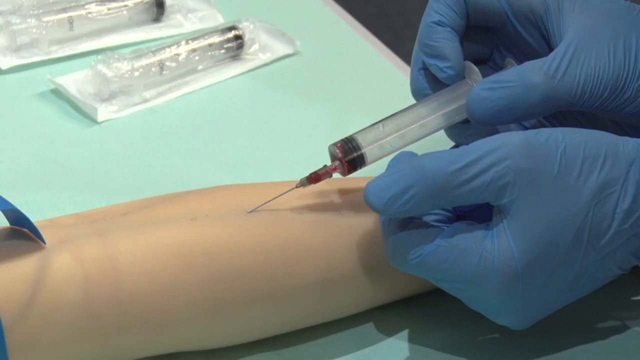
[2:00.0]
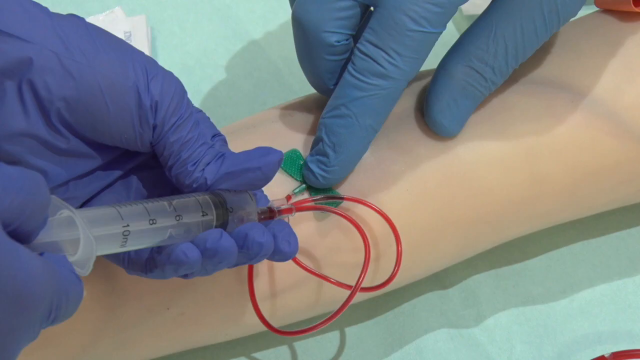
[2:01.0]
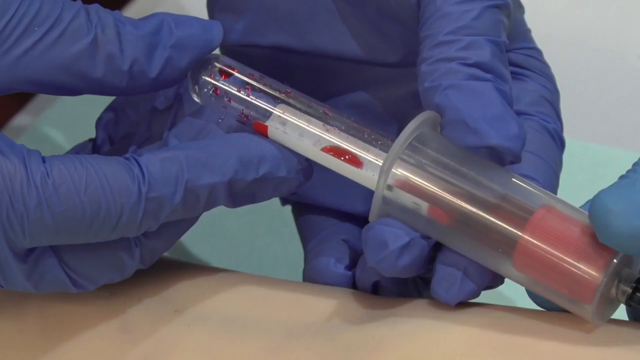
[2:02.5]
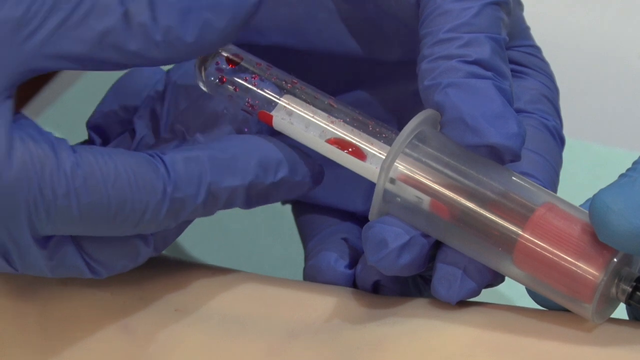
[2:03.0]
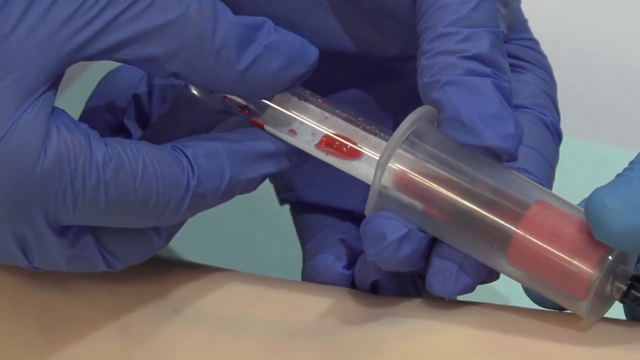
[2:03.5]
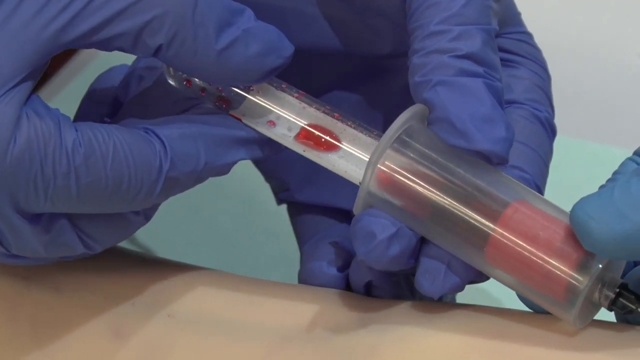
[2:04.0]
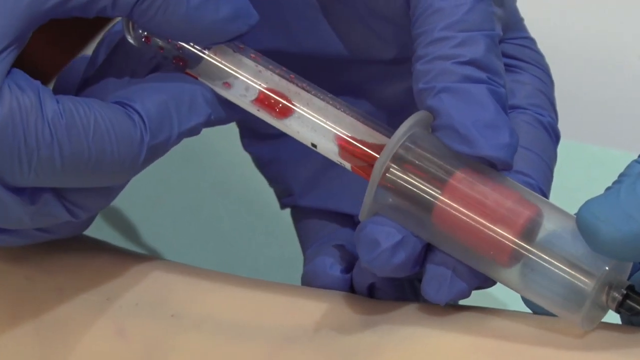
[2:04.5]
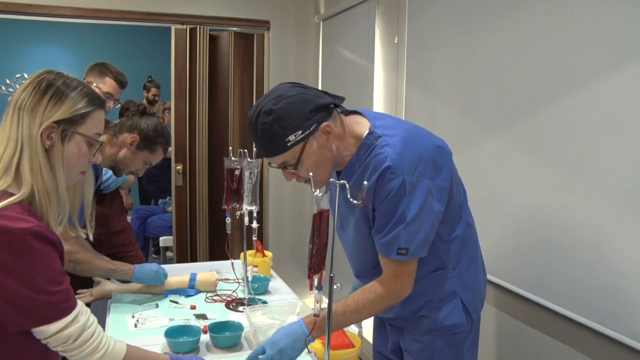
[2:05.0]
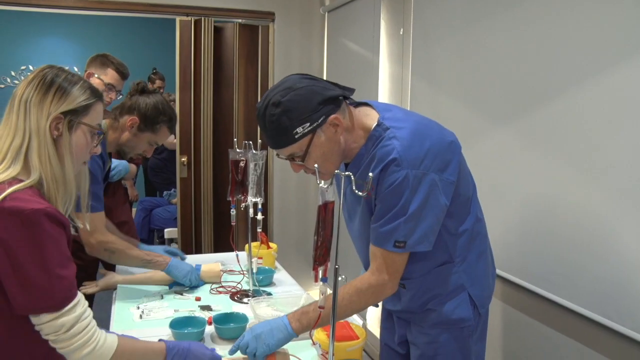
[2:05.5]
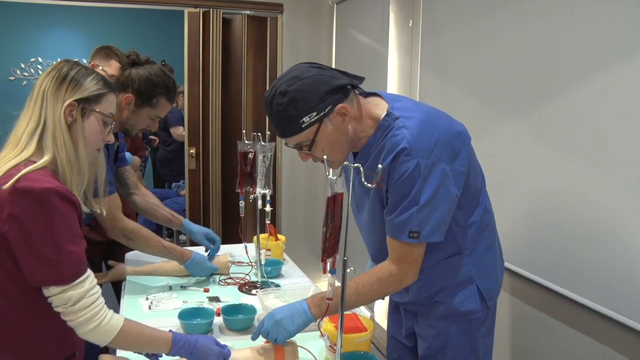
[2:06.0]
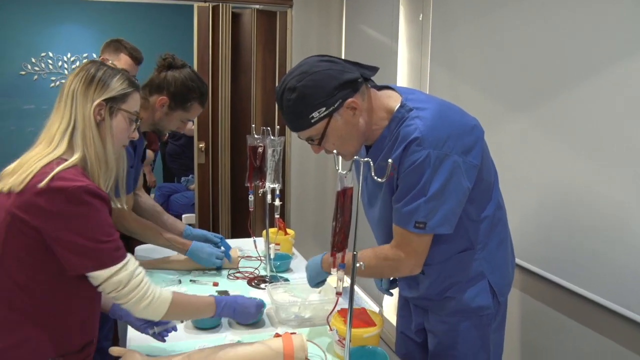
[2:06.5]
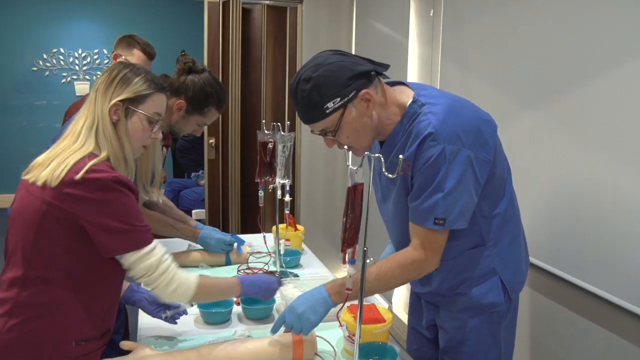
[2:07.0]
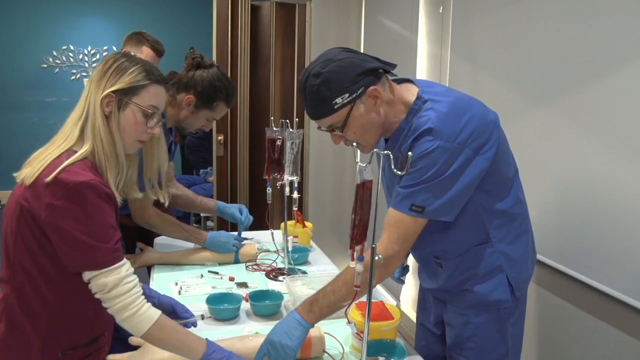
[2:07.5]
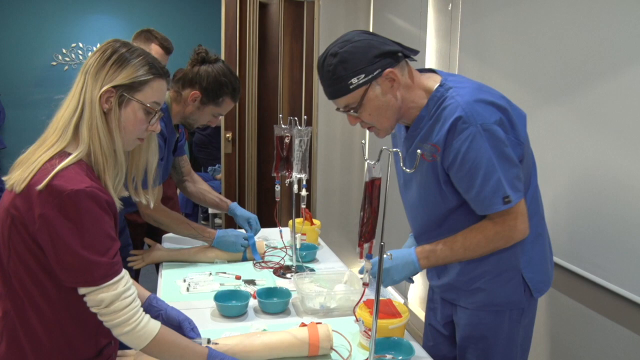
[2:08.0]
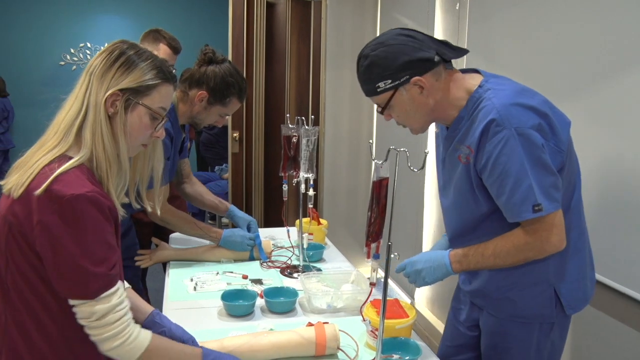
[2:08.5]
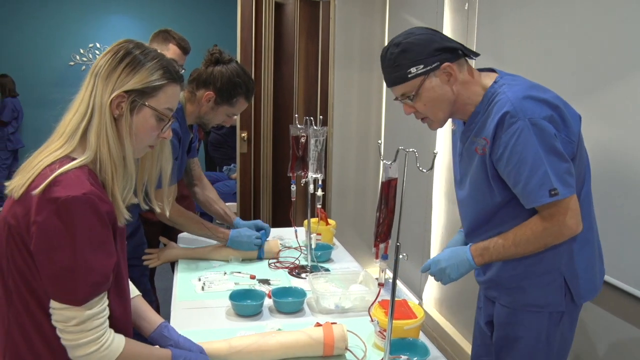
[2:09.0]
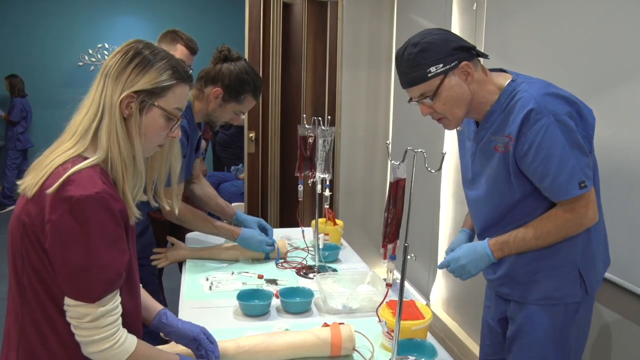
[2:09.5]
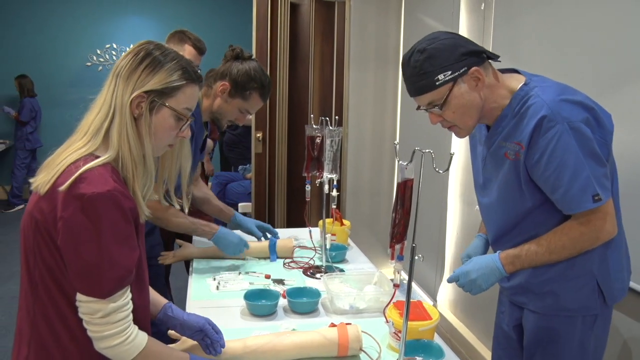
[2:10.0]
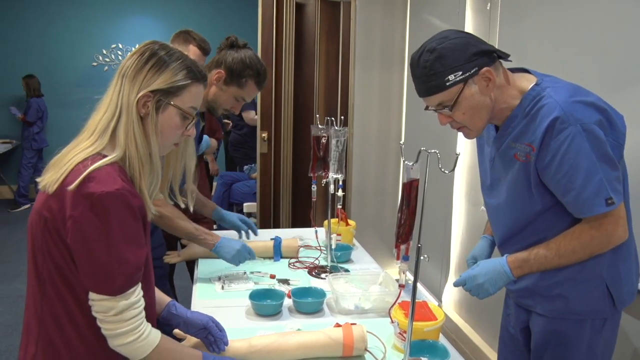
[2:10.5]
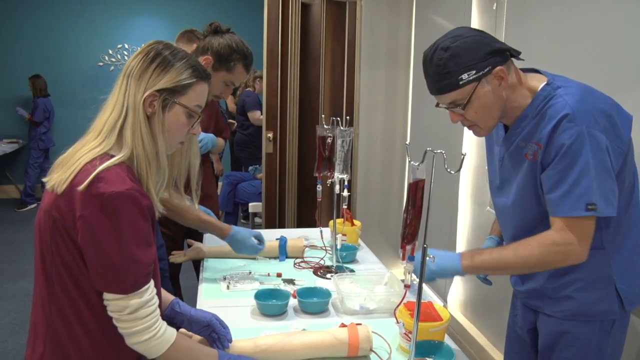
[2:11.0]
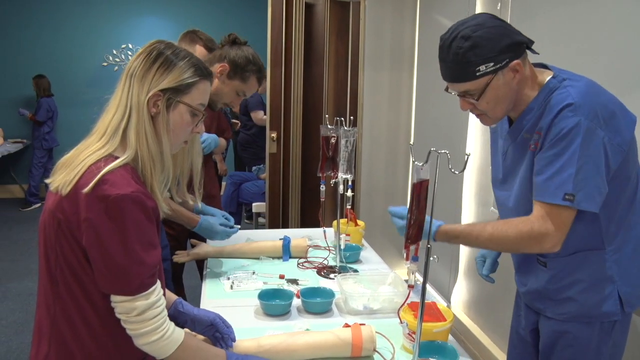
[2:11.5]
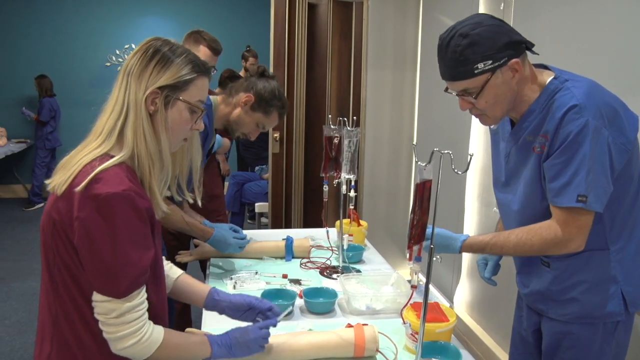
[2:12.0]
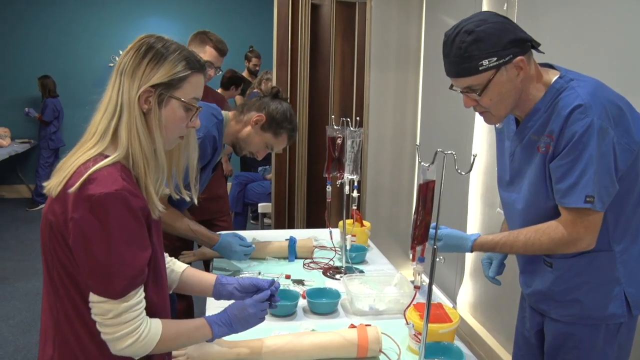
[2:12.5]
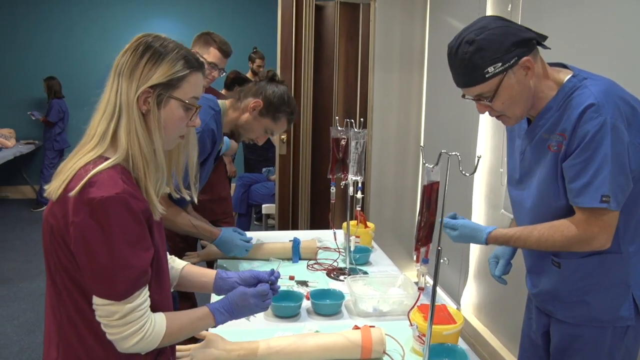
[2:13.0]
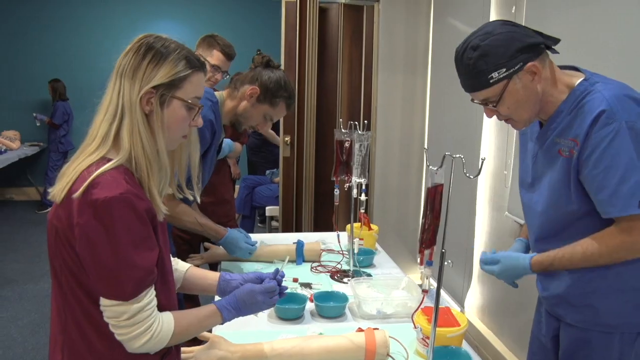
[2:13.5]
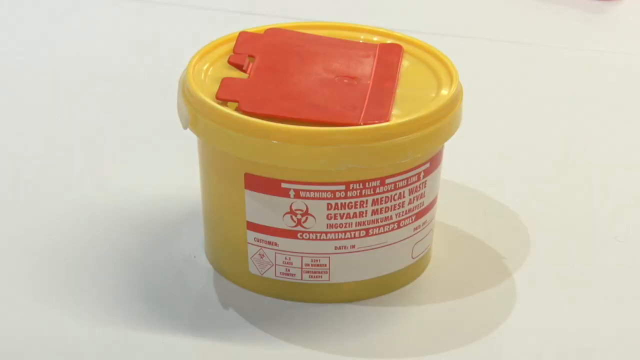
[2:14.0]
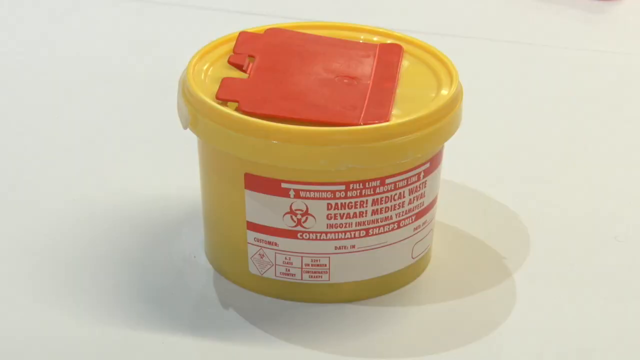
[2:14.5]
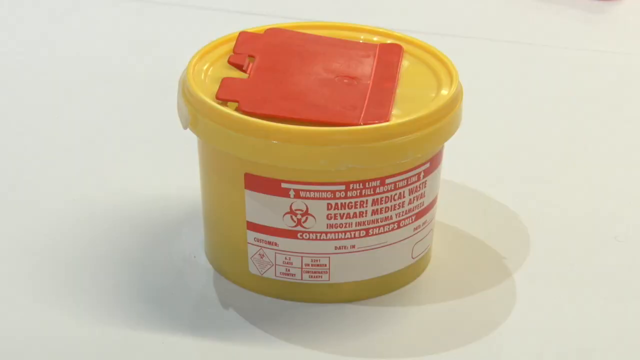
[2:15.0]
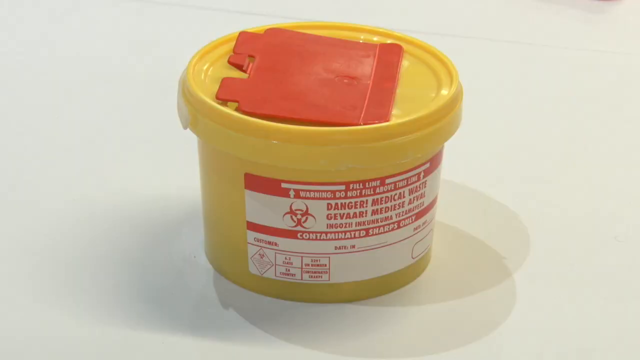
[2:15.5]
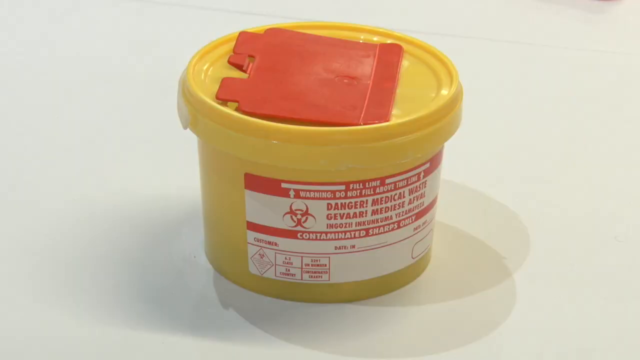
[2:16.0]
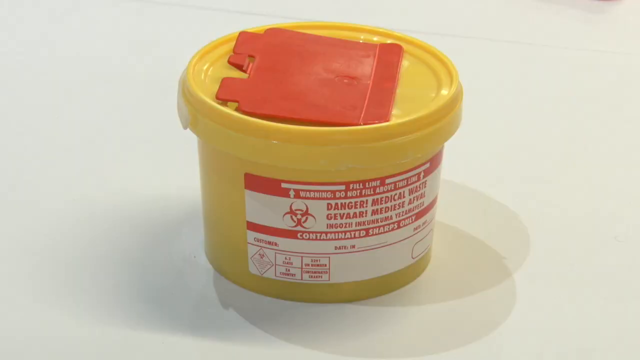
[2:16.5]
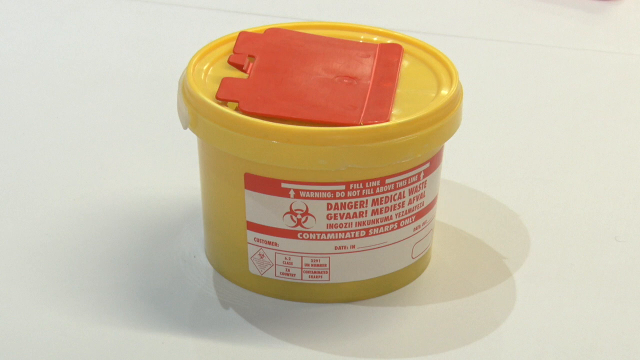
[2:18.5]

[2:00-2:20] In a close-up, a pair of blue-gloved hands gives a forearm an injection with a long, skinny needle and a large, clear syringe. What looks like another, lighter blue glove holds a green bow-tie-shaped plastic piece down against the forearm while the other person holds the syringe. Small tubes of blood are attached to the syringe, which seems to be drawing blood from the arm. A pair of blue-gloved hands then pulls a small glass cylinder that looks like it has a few droplets of blood in it away from the syringe. The scene changes to a table with medical supplies laid out, where a few students appear to be working with an instructor. On the left, a male student ties a thick blue rubber band around the top of a dummy arm, then picks up a needle to give it an injection. On the right, a woman works more closely with the instructor, who appears to be showing her how to position the needle before she gives the injection. The scene then changes to a close-up of a round yellow container on a white table that looks to be only a few inches tall. On the front is a red and white label reading "danger, medical waste", with a biohazard sign and other warning messages, and a red plastic square piece is on top of the lid, possibly an extra cover of some sort.